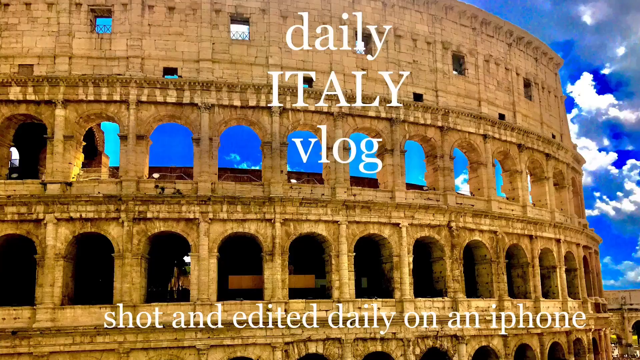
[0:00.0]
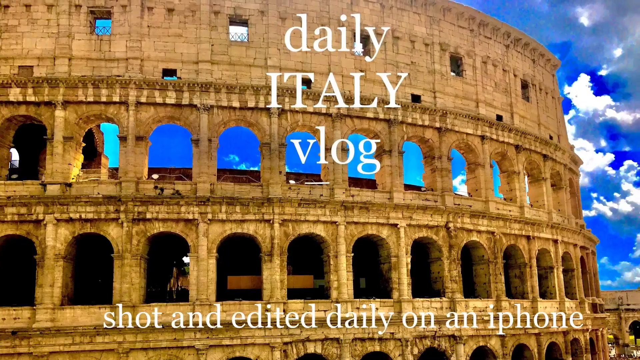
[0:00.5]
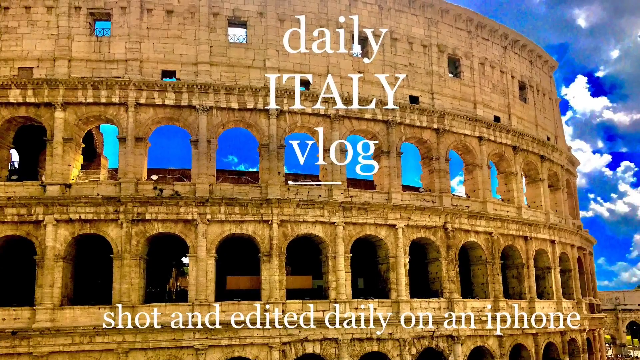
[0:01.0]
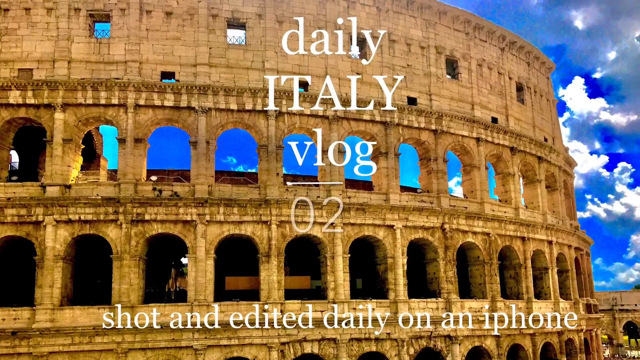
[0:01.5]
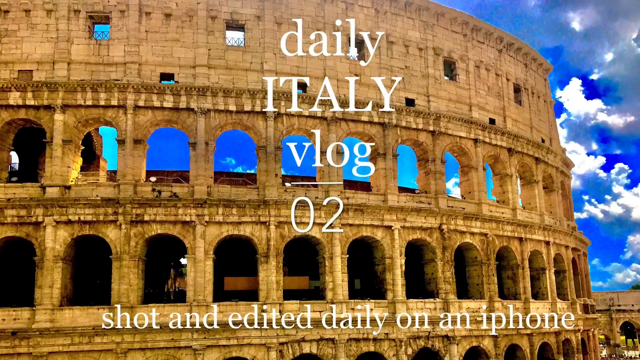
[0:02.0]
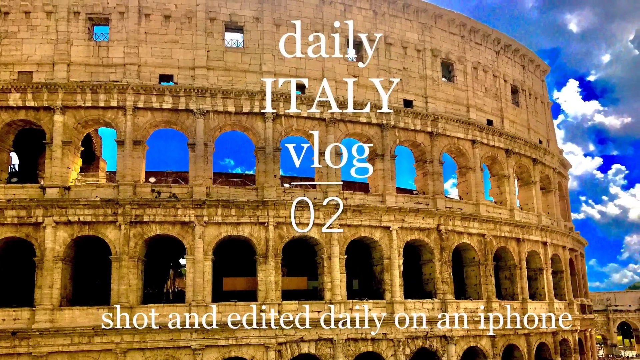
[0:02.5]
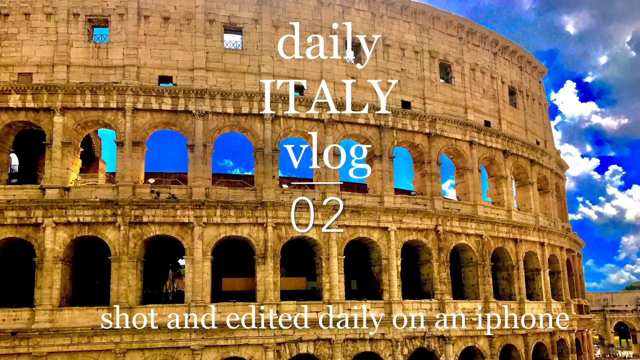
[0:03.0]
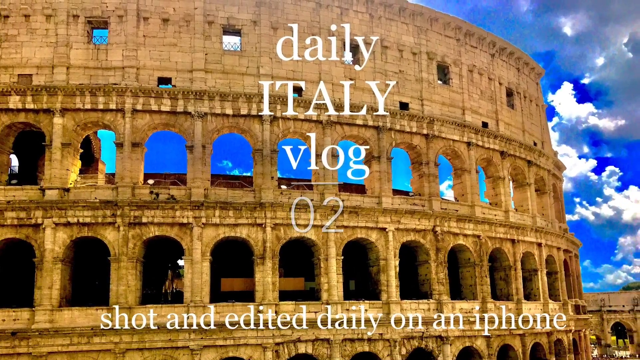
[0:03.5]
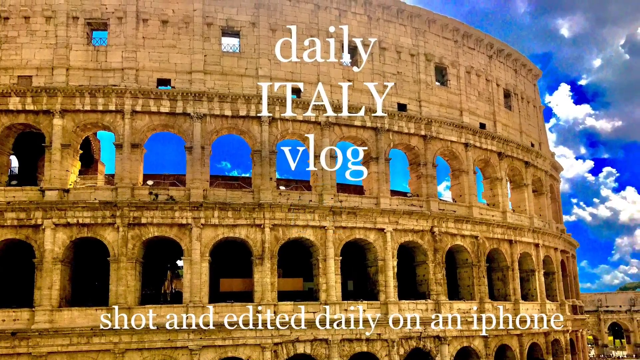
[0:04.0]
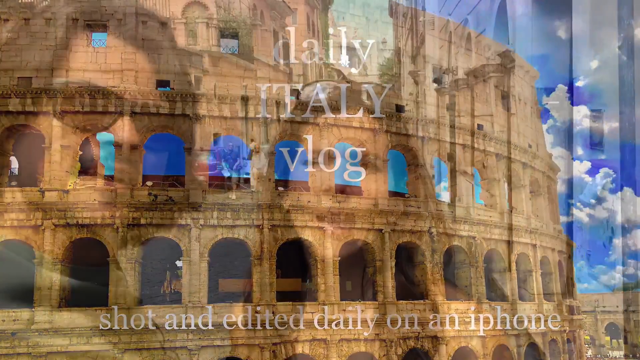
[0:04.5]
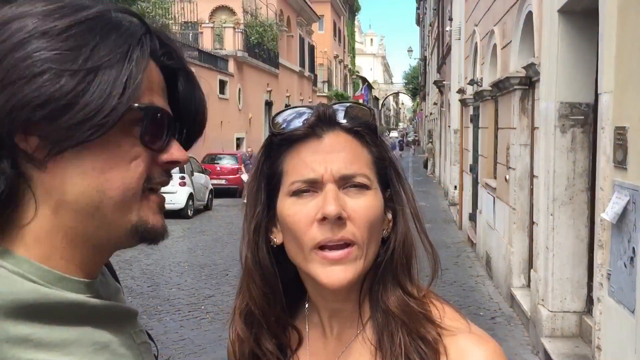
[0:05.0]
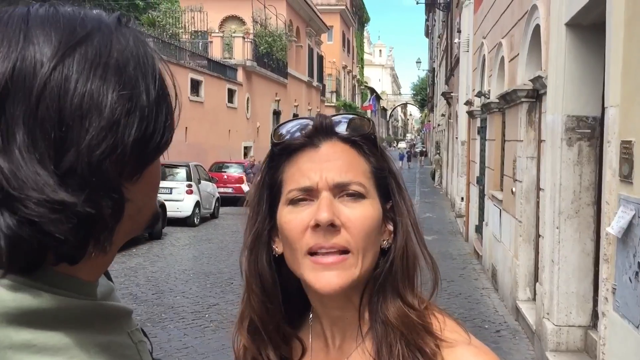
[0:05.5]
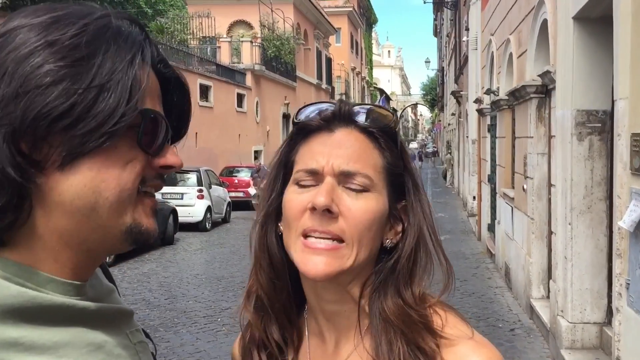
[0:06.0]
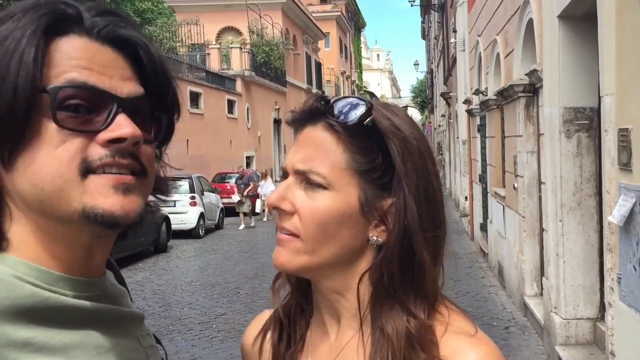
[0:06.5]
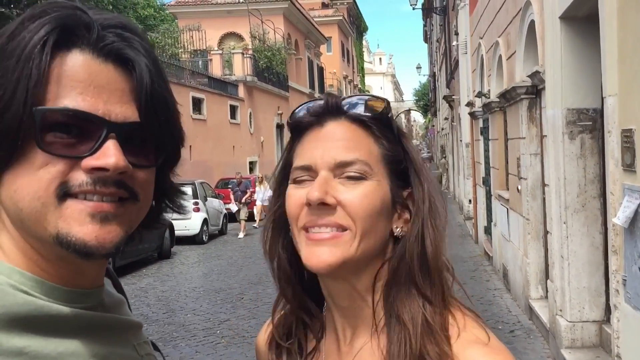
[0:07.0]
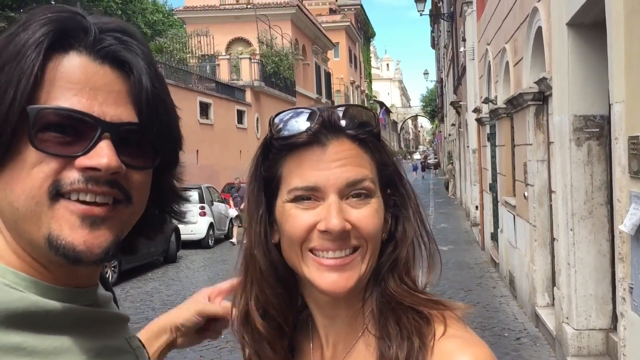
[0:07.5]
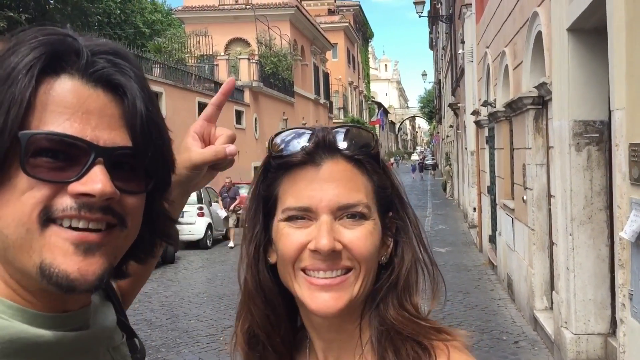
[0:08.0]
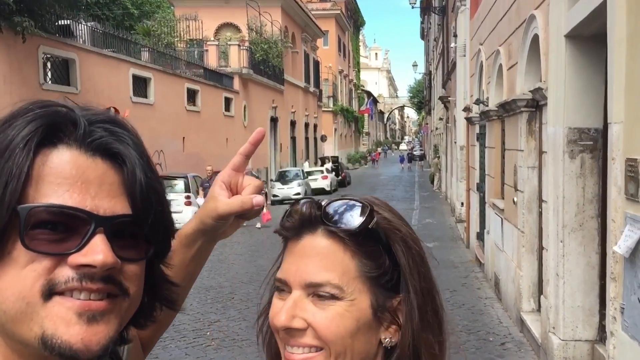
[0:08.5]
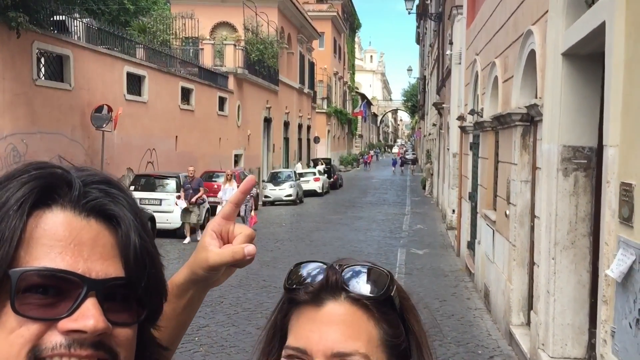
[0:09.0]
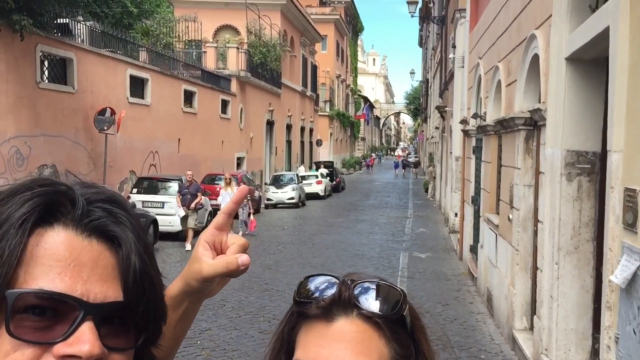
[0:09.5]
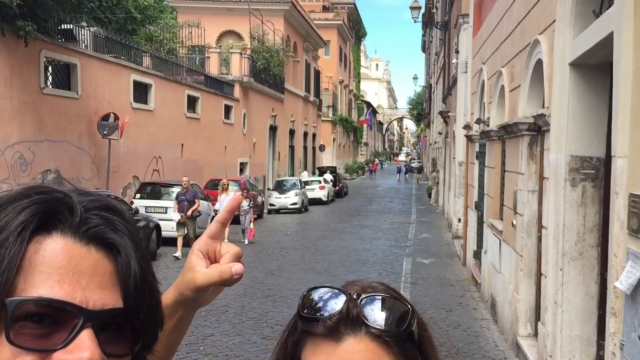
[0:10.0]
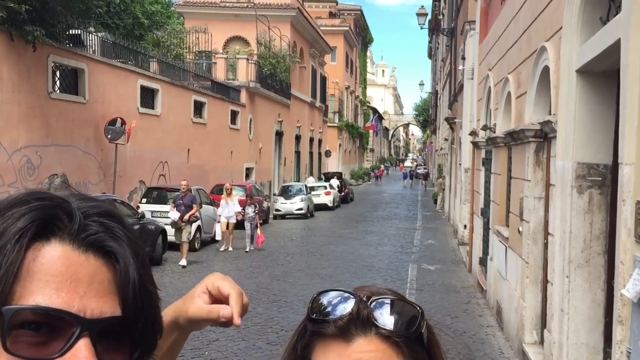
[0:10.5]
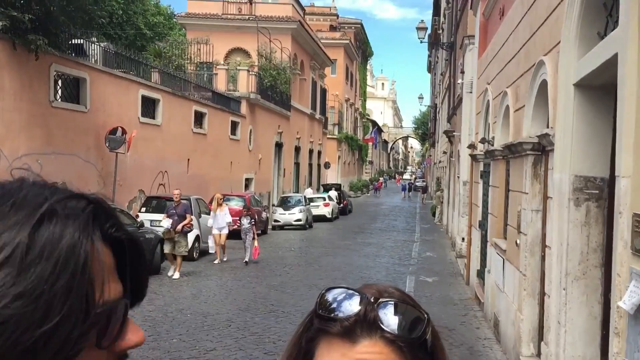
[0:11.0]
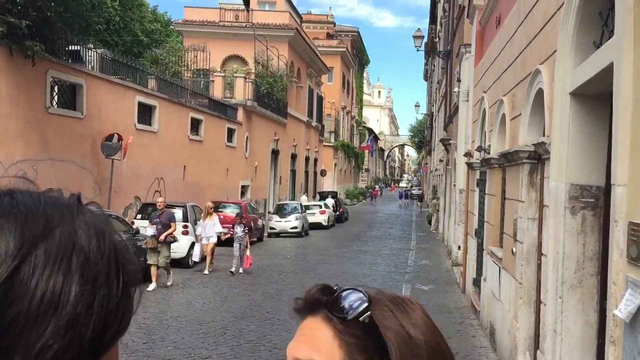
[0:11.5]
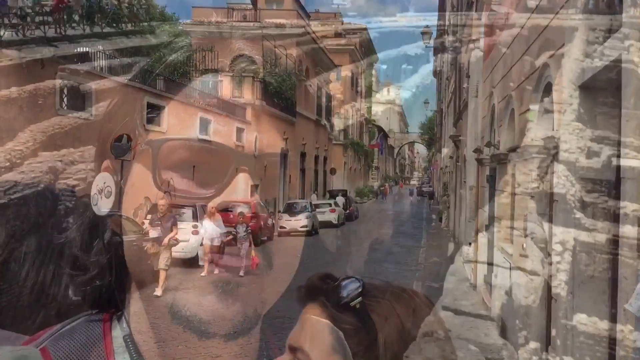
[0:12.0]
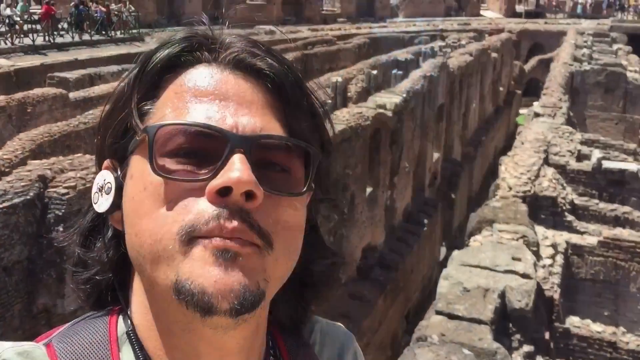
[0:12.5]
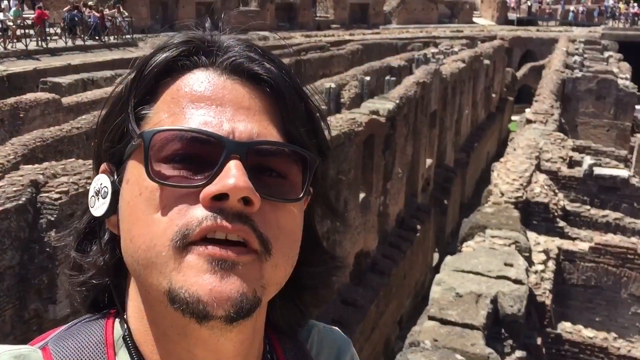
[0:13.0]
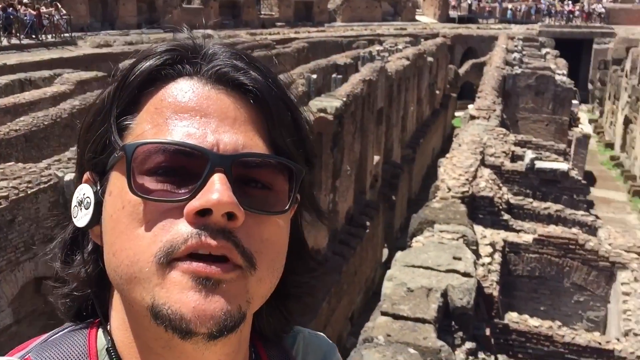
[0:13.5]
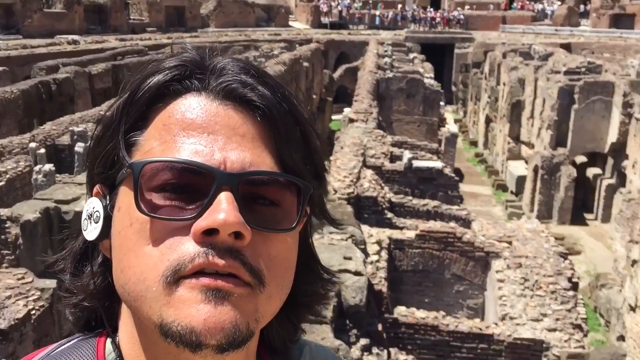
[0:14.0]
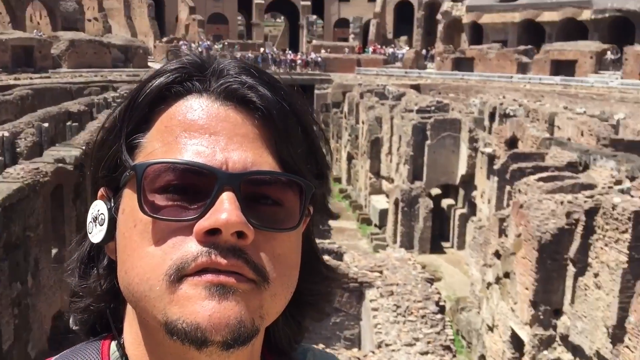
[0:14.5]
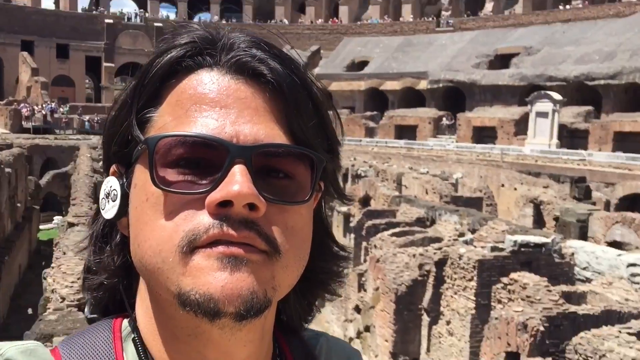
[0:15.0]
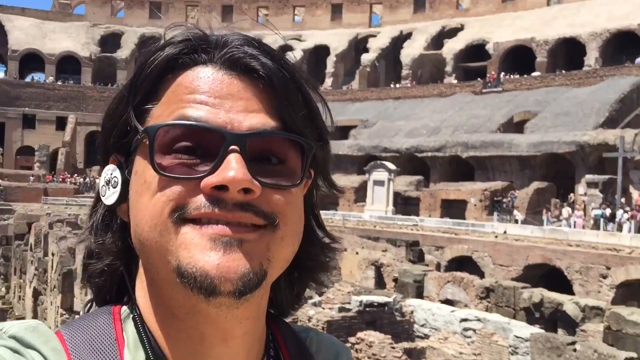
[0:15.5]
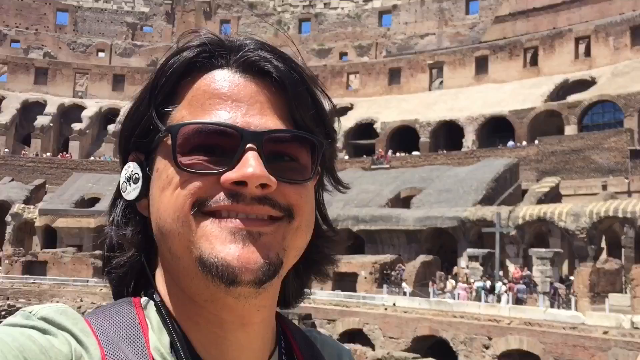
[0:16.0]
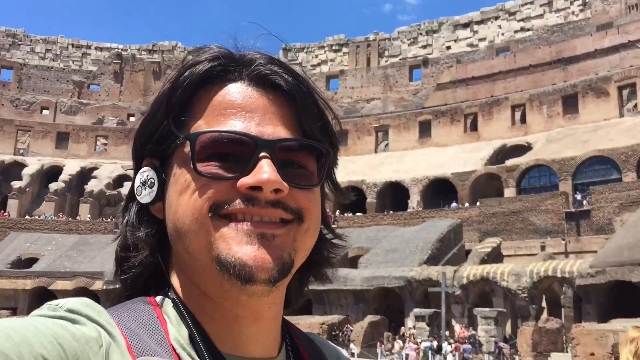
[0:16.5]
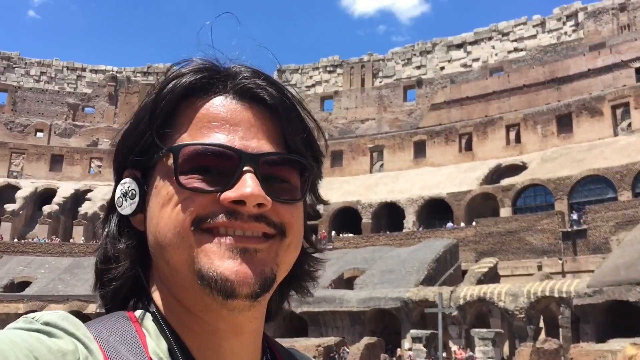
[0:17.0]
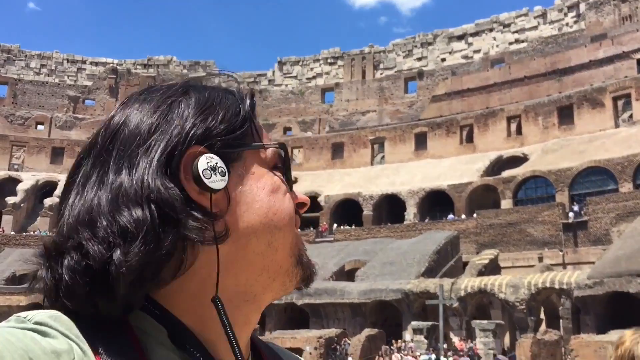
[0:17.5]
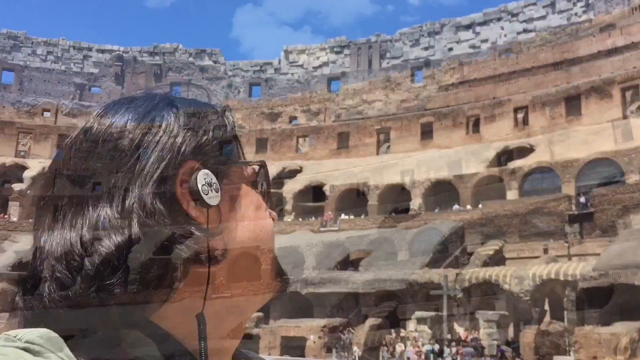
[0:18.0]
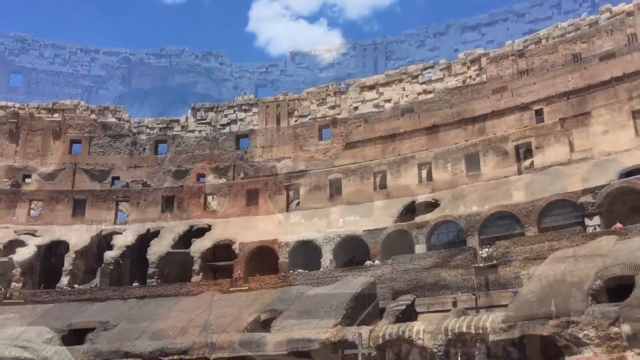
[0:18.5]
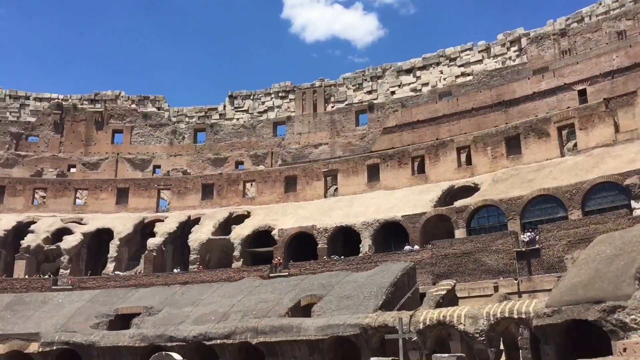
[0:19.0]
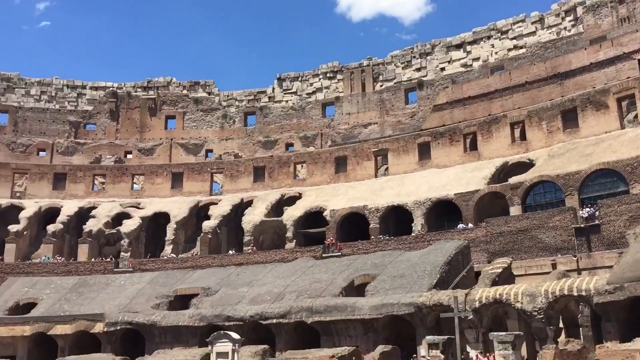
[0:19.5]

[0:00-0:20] A travel vlog filmed in Italy opens with a title card reading "Daily Italy vlog shot and edited daily on an iPhone," set over a photograph of the Roman Colosseum. As it fades, a man and a woman appear on what looks like a street in Rome. The woman, on the right, talks to the camera; the man turns and nods, then points down the street and says something himself as the camera moves up to show the street. Next the man is seen standing on what looks like the floor of the Colosseum, his face in the foreground. He speaks to the camera and moves it around so that the walls of the Colosseum are visible. He turns and looks up at the walls, and then only the interior of the Colosseum is shown, without his face.